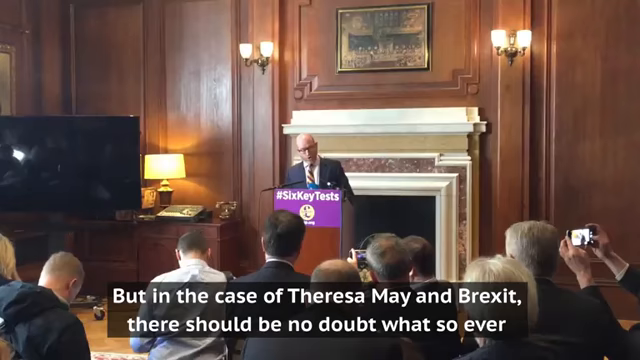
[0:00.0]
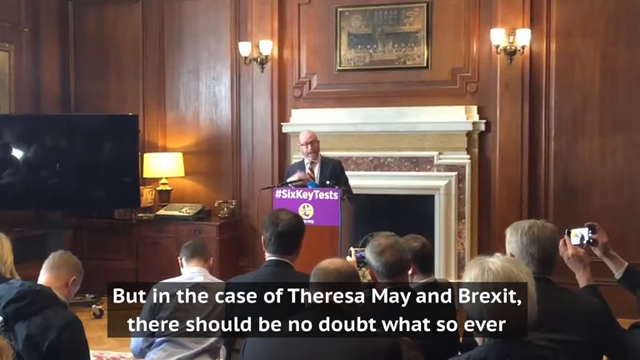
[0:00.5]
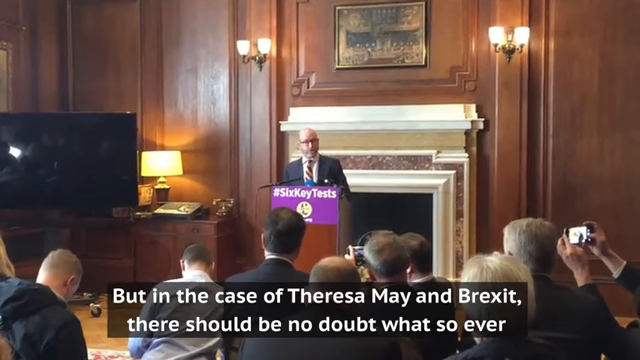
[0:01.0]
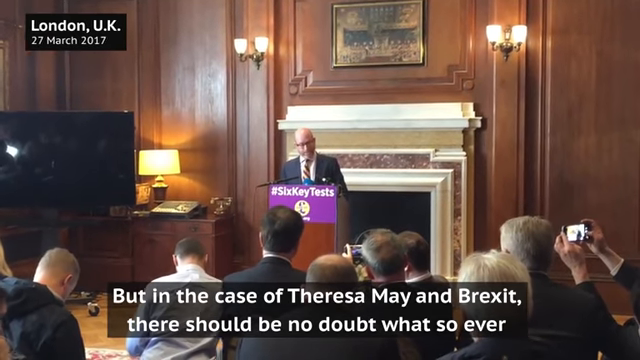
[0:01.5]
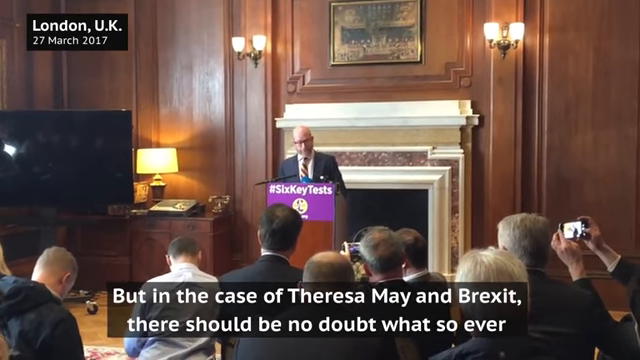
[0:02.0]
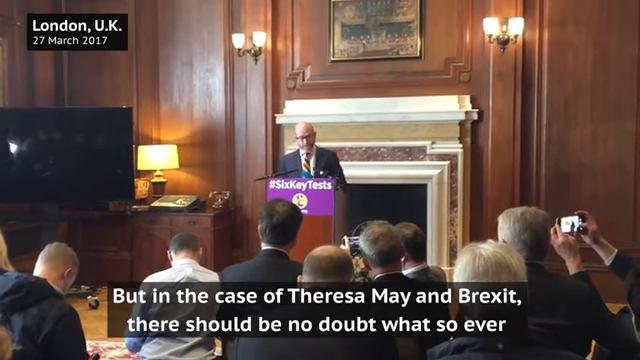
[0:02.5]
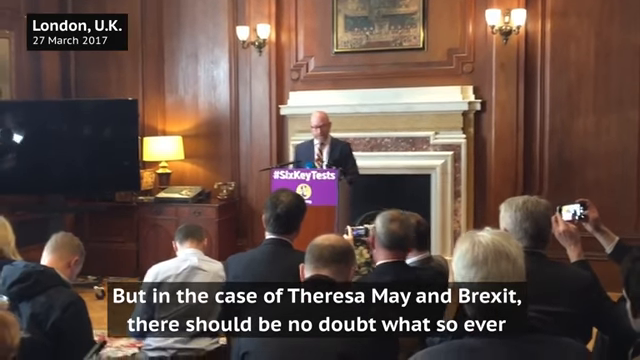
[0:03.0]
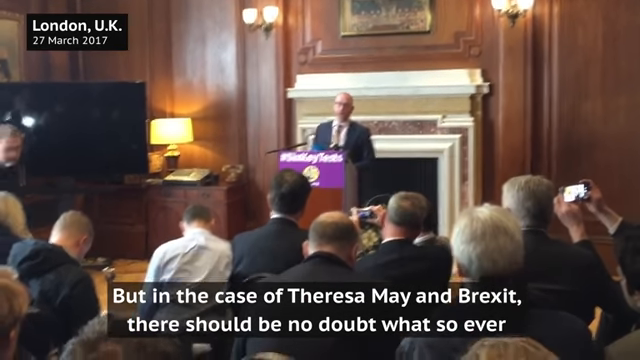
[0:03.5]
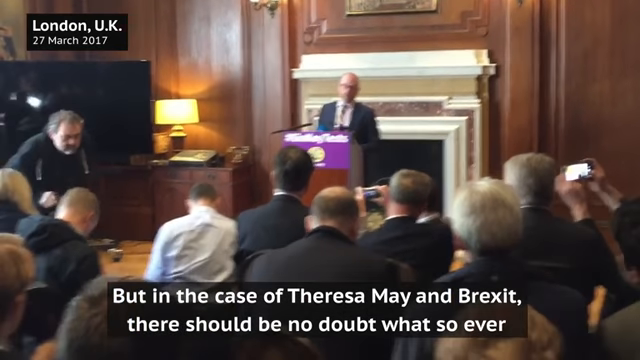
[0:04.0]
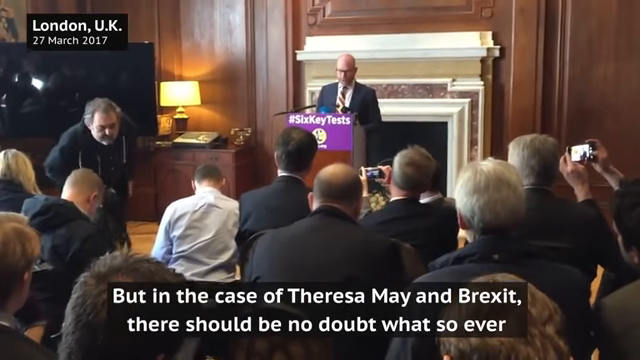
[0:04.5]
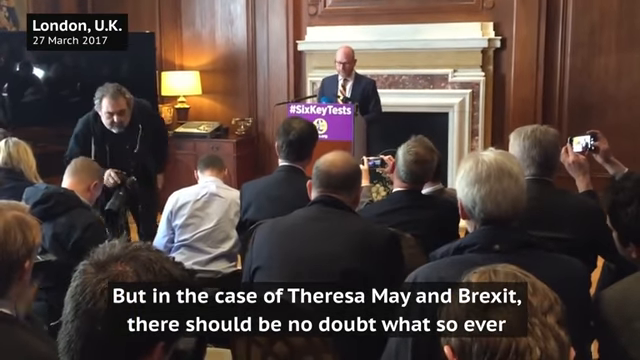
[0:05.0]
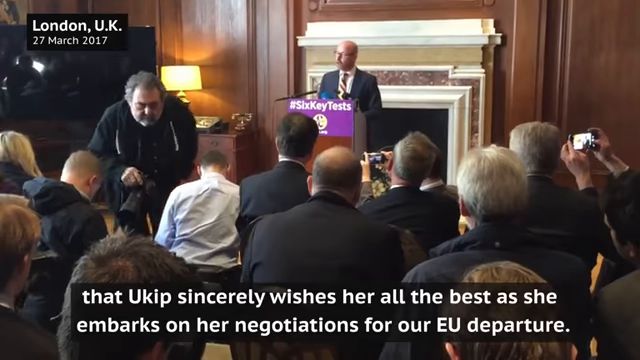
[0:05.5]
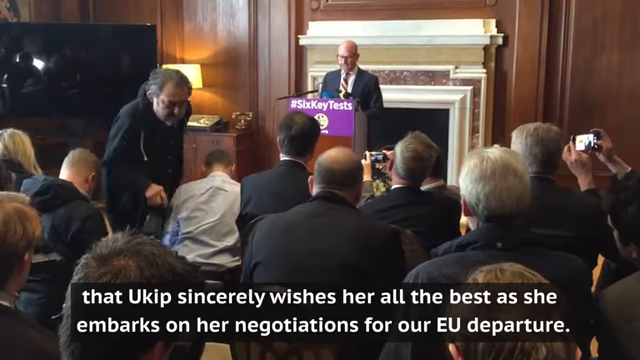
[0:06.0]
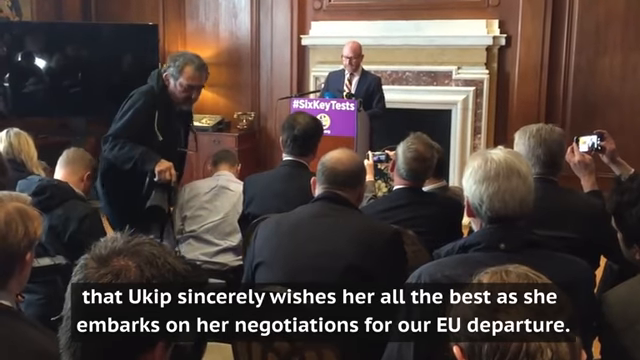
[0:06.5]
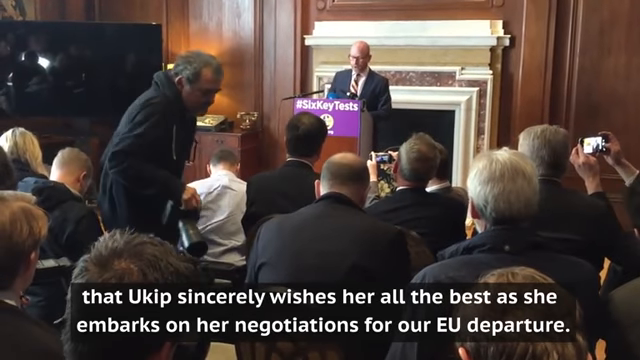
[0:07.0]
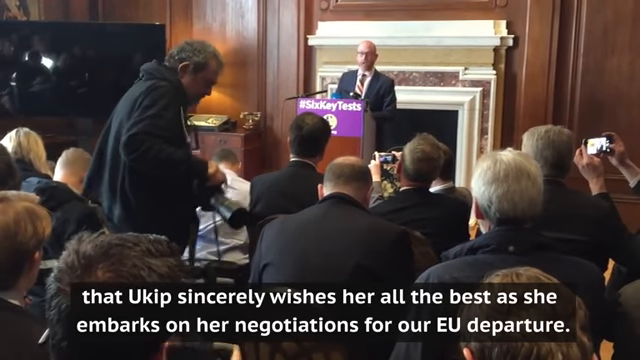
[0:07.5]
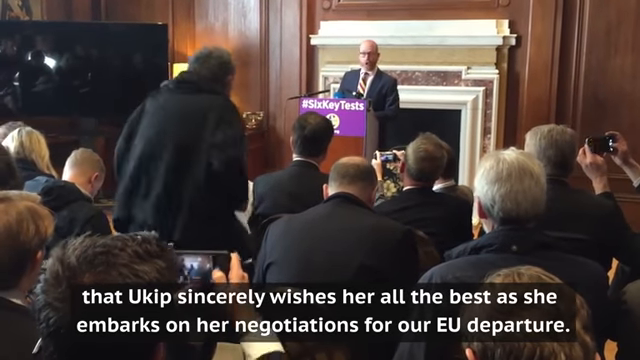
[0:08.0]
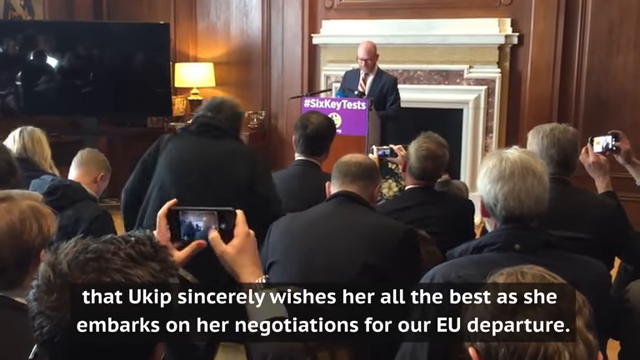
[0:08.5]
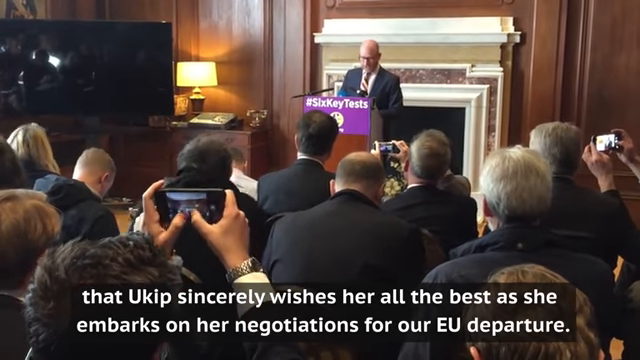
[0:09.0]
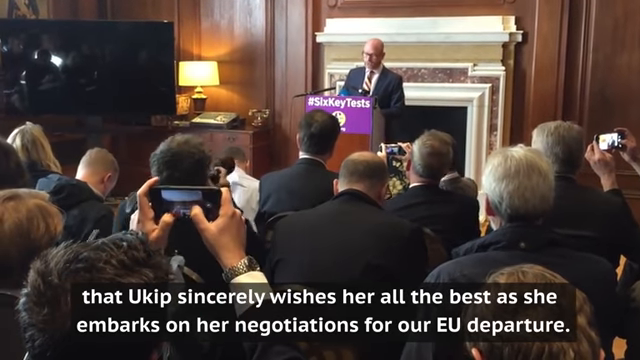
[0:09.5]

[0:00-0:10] A man in a black suit and a tie stands at a podium giving a speech. The podium is brown, and its top portion shows "#sixkeytests" in white on a violet background; a mic is attached above the podium. The room has dark brown wood paneling and a fireplace behind the podium, with two lamps on both sides of the fireplace and a painting placed above it between the lights. A few people sit in front of the man. A large black TV screen is visible to the left of the podium. White subtitles run along the bottom of the screen. Then "London, UK" with a date appears at the top right. Next, a cameraman walks in from the left toward the audience and sits at the center, and a person at the back near the camera holds his phone in landscape mode with both hands, shooting the speech.